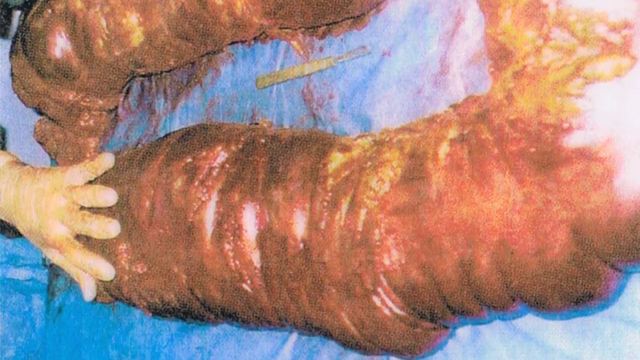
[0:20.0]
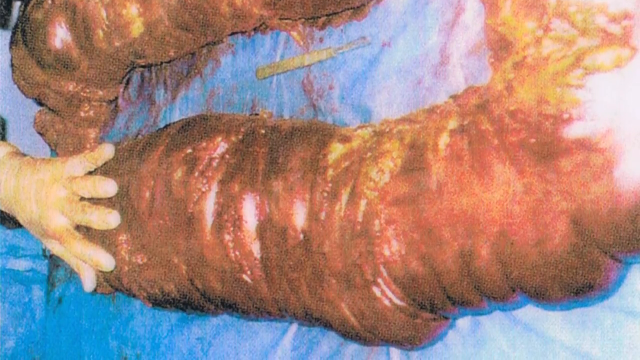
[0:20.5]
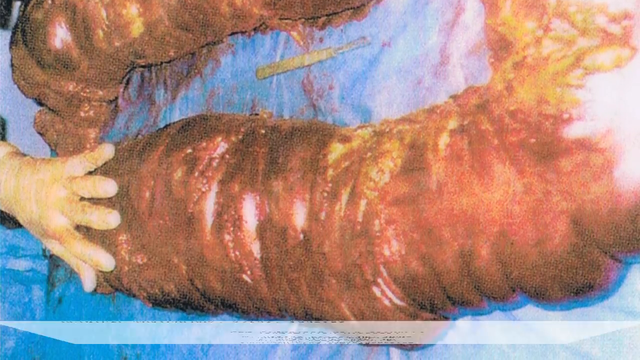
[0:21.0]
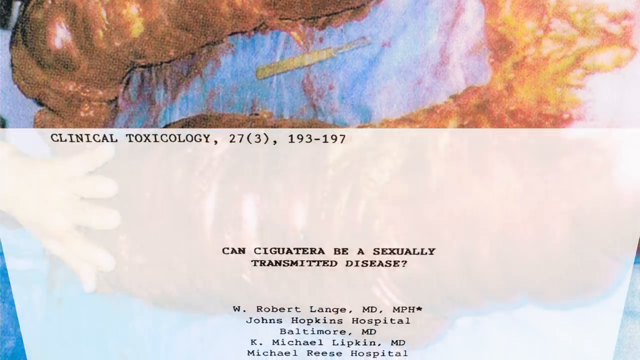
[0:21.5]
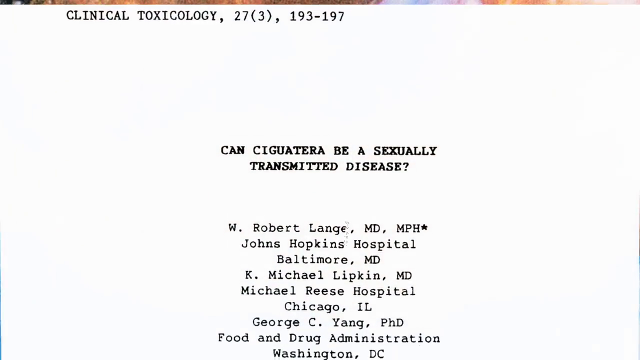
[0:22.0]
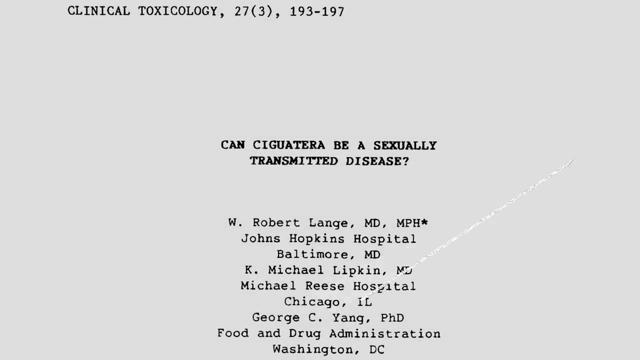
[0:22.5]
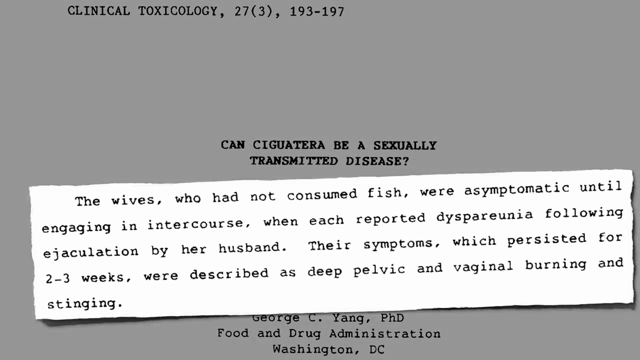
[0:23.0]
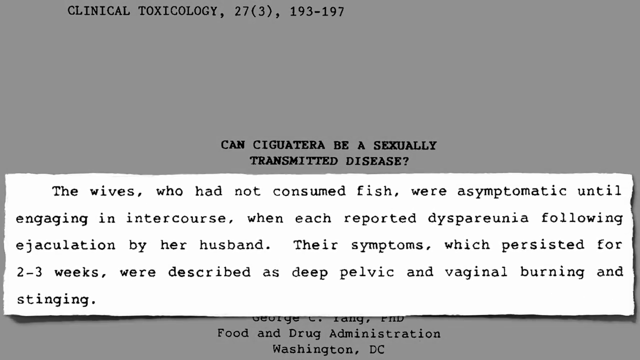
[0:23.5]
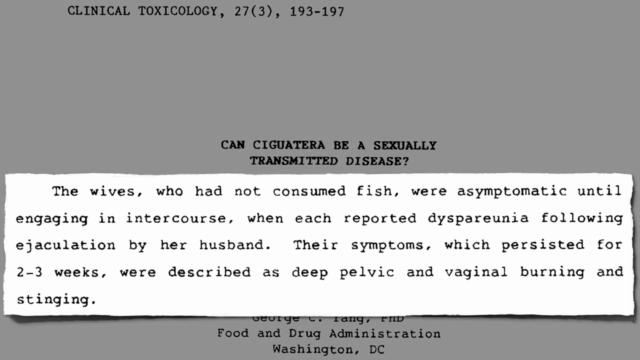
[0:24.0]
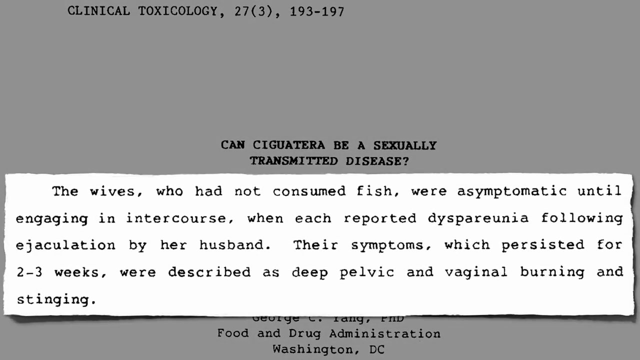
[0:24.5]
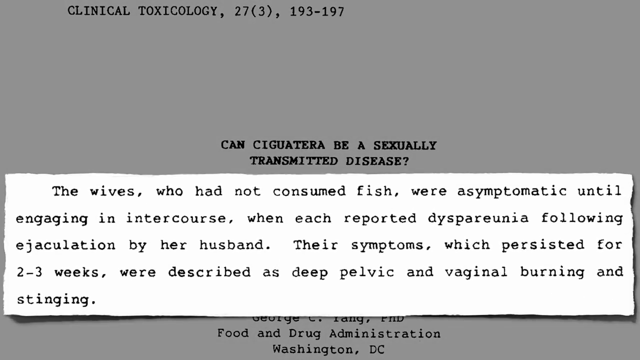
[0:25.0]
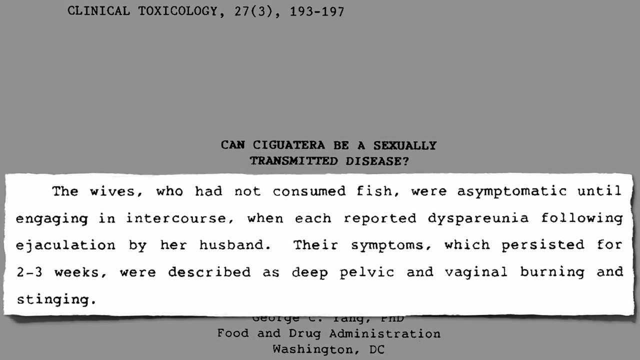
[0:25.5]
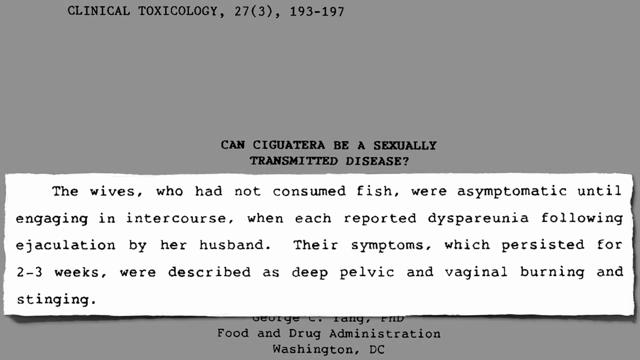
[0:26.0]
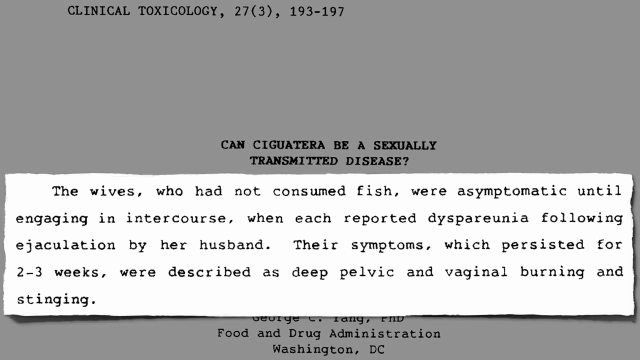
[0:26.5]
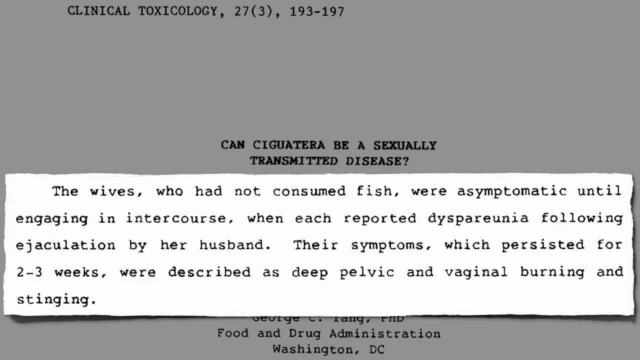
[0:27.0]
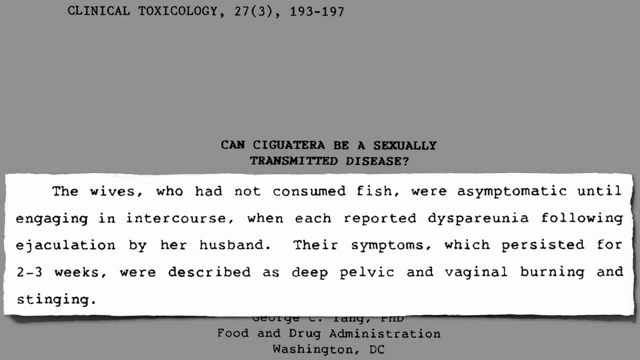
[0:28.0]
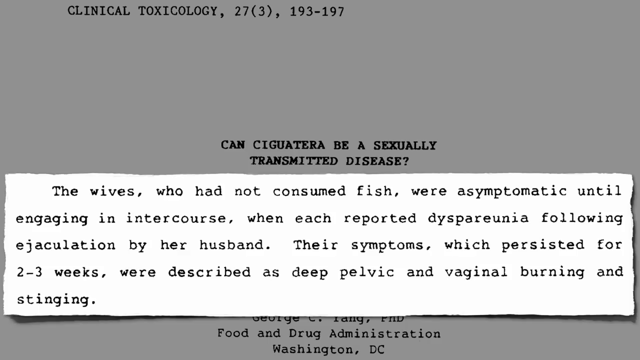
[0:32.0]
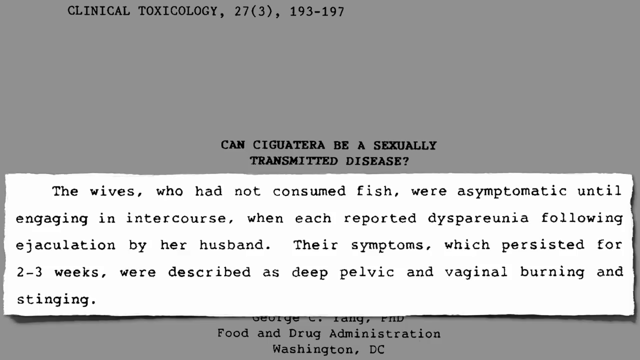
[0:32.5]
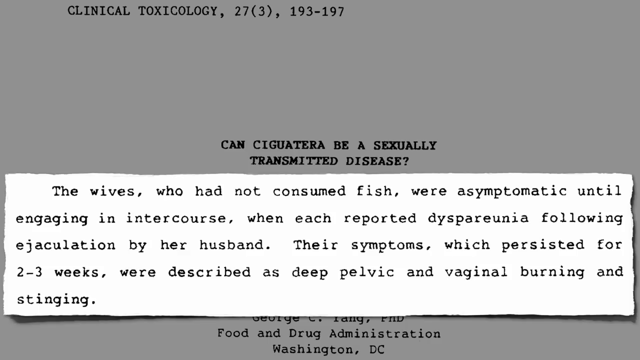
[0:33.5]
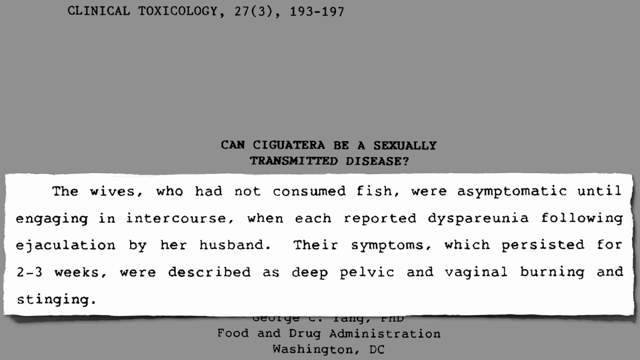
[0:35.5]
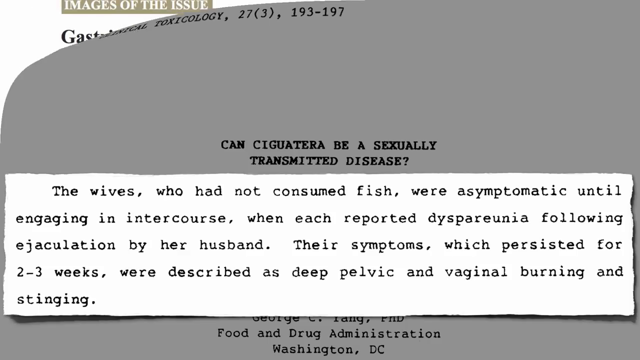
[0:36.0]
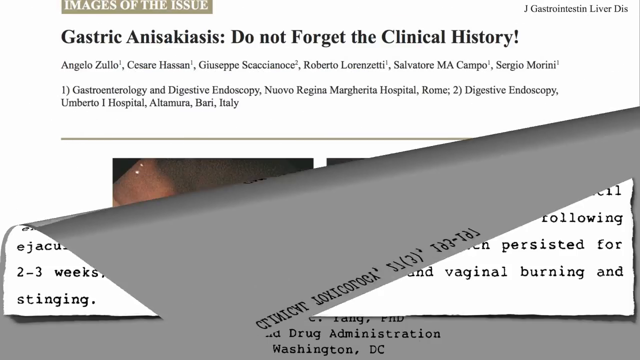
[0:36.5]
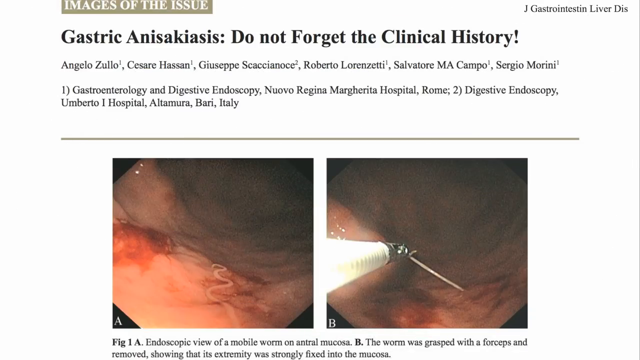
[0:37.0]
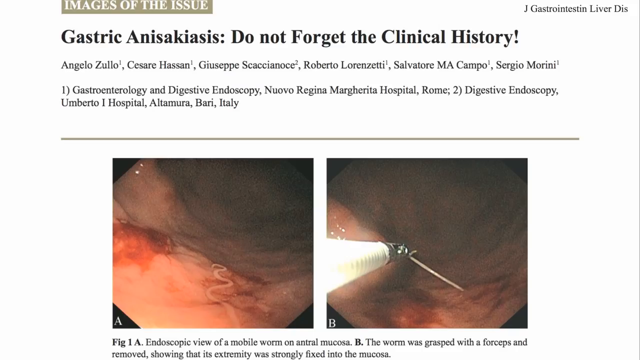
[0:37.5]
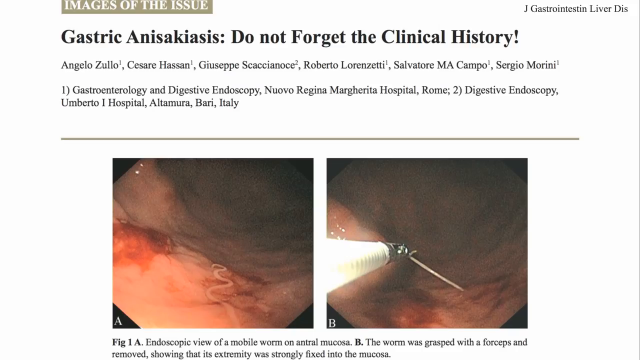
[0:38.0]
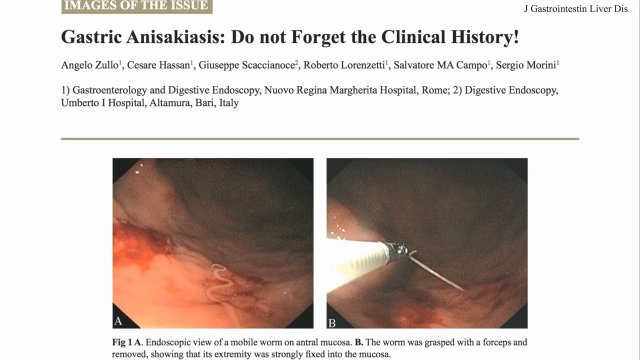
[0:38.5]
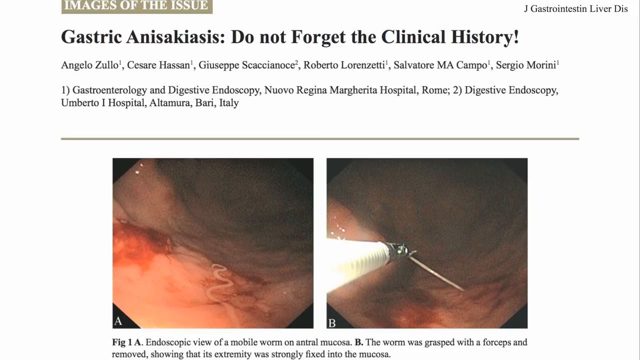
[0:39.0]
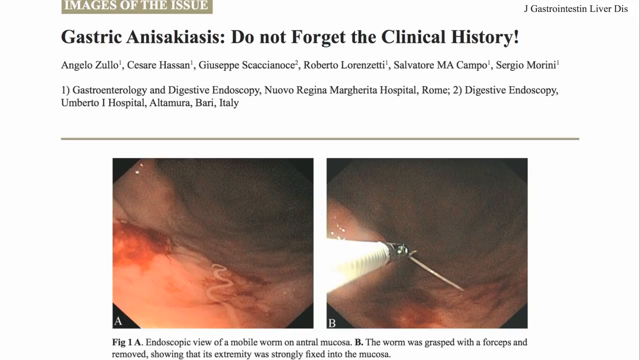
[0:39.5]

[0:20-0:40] A very large mystery object has a human hand placed on it. The object appears to be some type of inside of an animal's body and looks like the product of a surgery. Then words appear on the screen: "The wives, who had not consumed fish, were asymptomatic until engaging in intercourse when each reported dyspareunia following ejaculation by her husband. Their symptoms, which persisted for two to three weeks, were described as deep pelvic and vaginal burning and stinging." The text, in black letters against a white background, appears to be an excerpt from an article. Next comes a page with the words "Images of the issue" and "Don't forget the clinical history," along with a couple of photos of the inside of the human body taken with some kind of surgical camera.